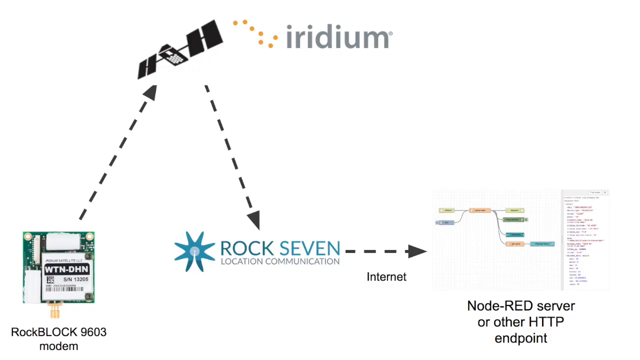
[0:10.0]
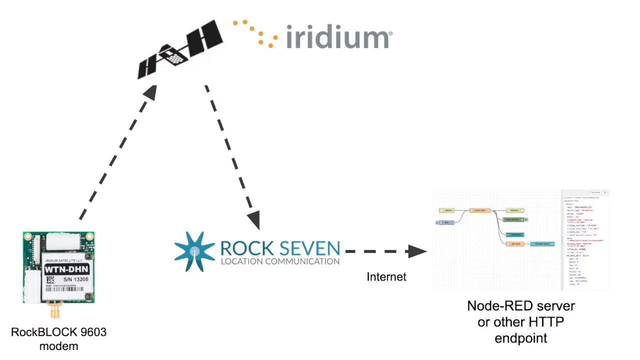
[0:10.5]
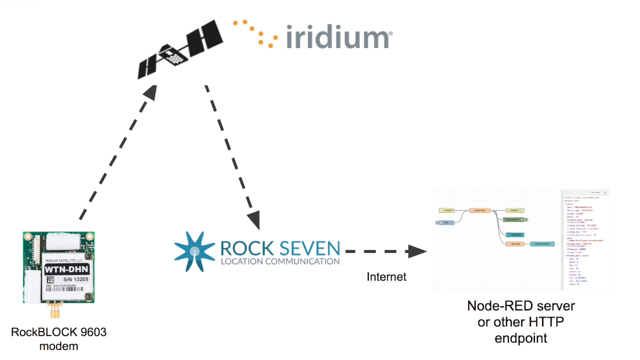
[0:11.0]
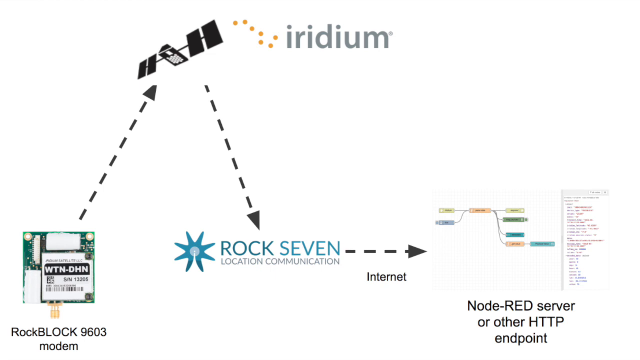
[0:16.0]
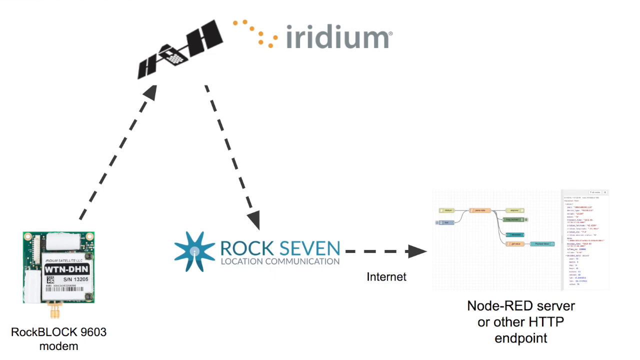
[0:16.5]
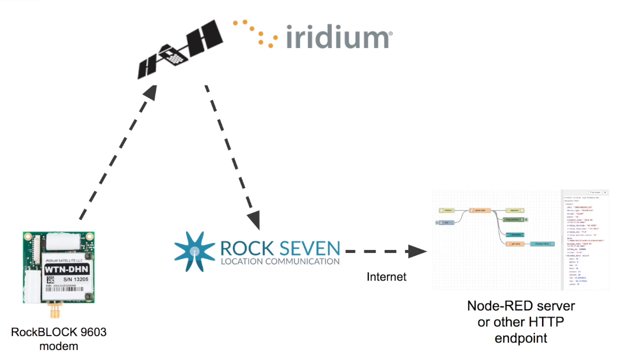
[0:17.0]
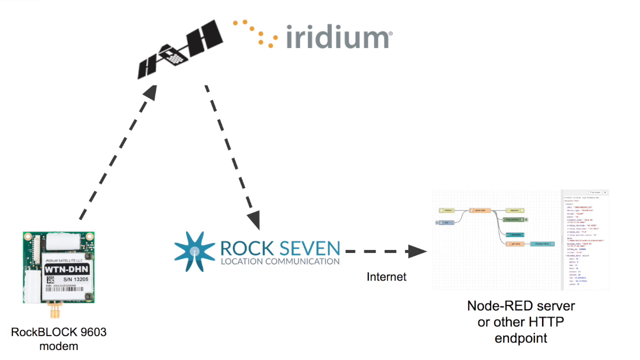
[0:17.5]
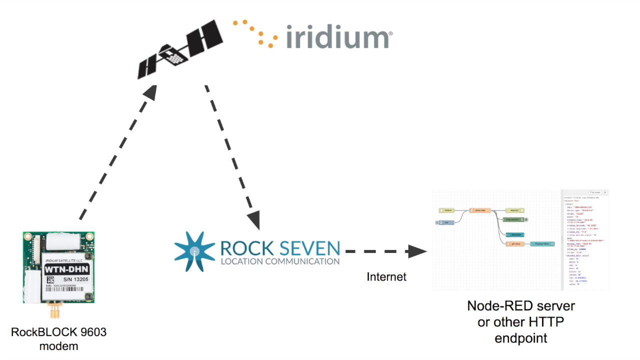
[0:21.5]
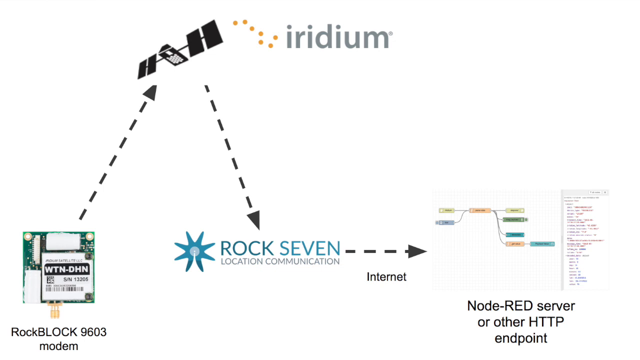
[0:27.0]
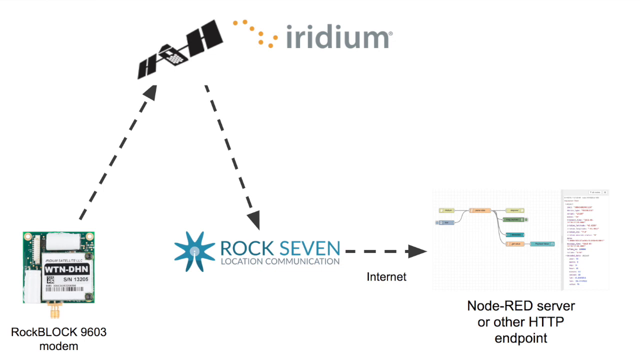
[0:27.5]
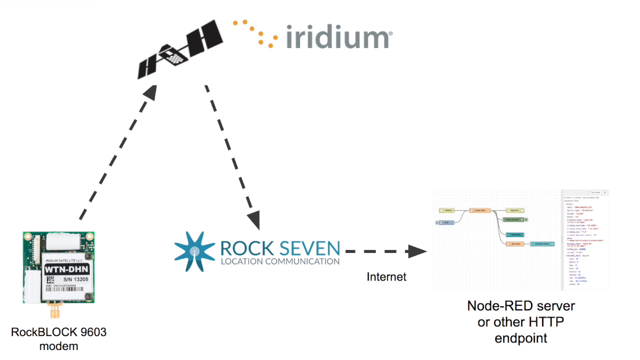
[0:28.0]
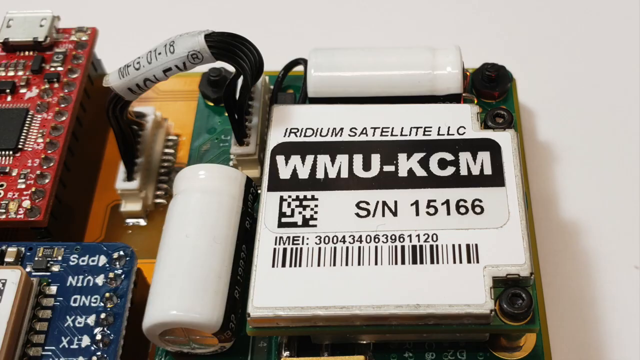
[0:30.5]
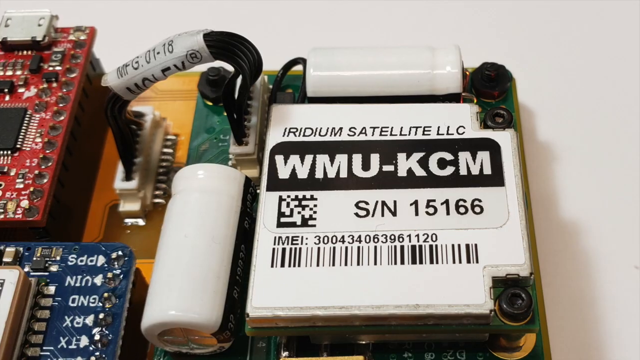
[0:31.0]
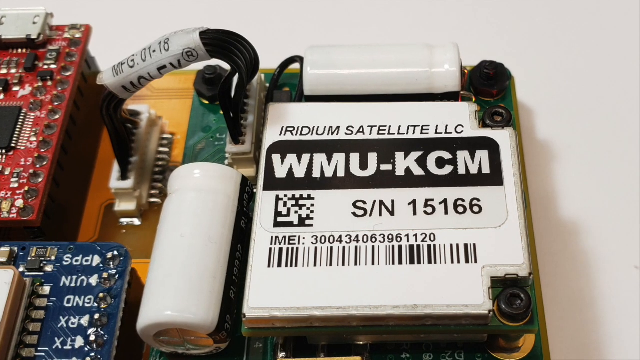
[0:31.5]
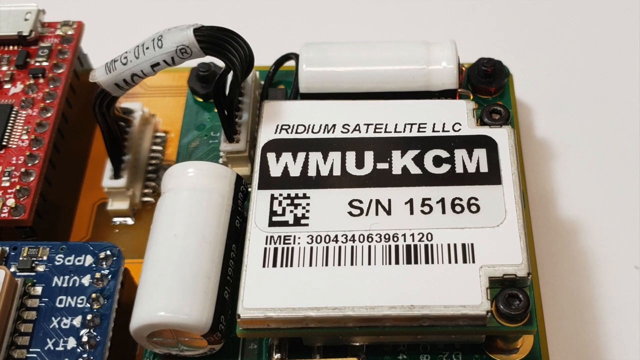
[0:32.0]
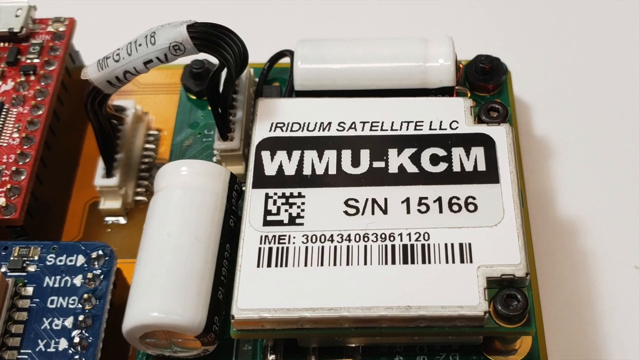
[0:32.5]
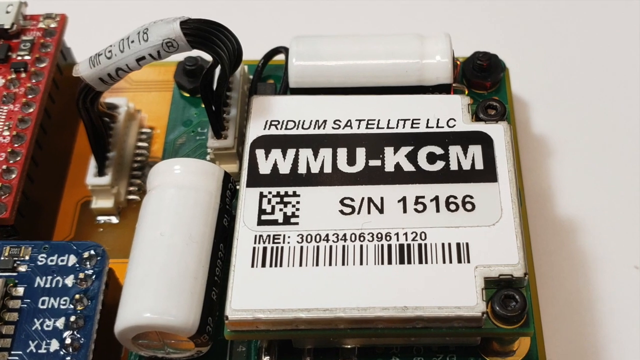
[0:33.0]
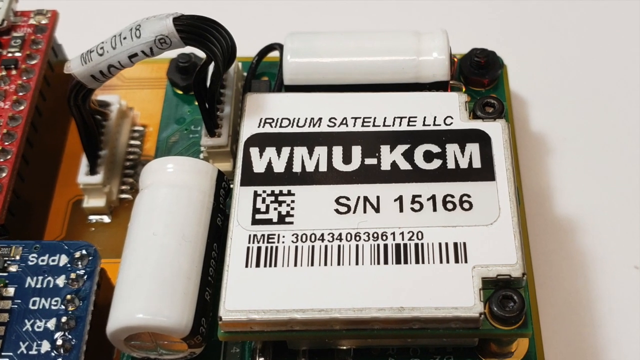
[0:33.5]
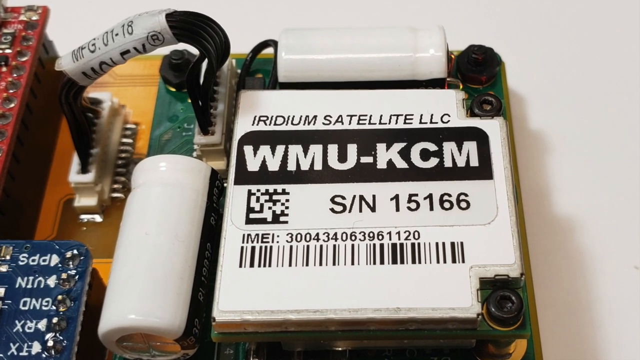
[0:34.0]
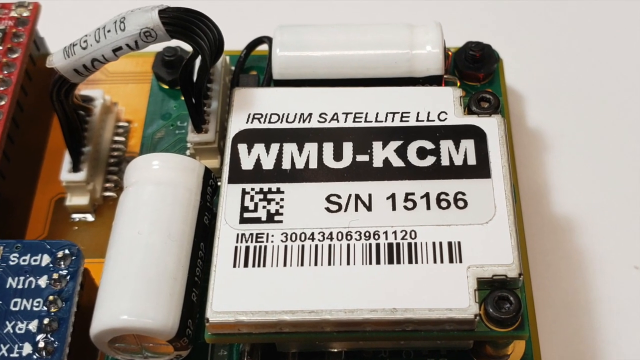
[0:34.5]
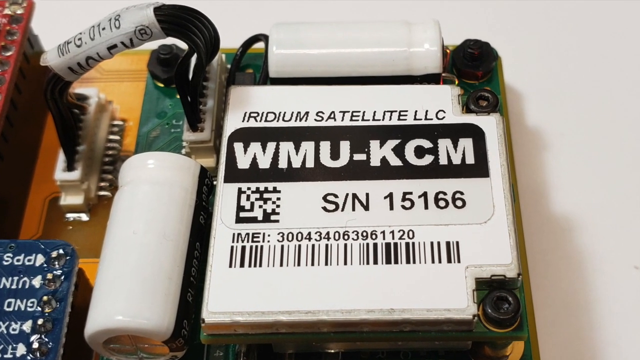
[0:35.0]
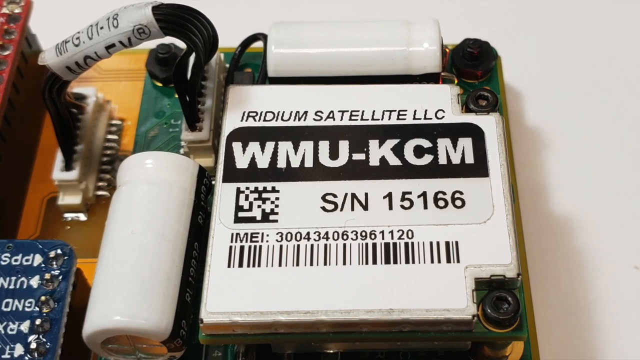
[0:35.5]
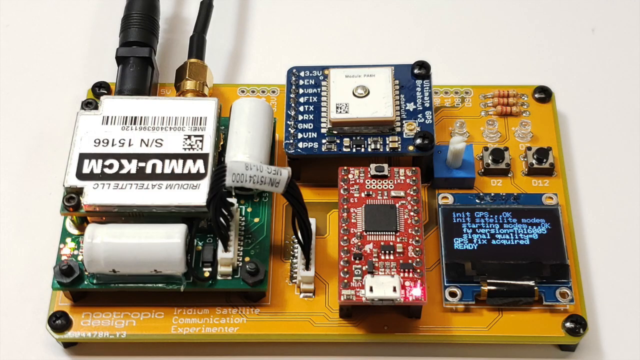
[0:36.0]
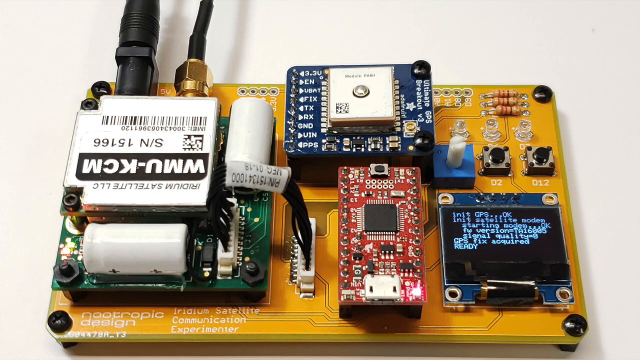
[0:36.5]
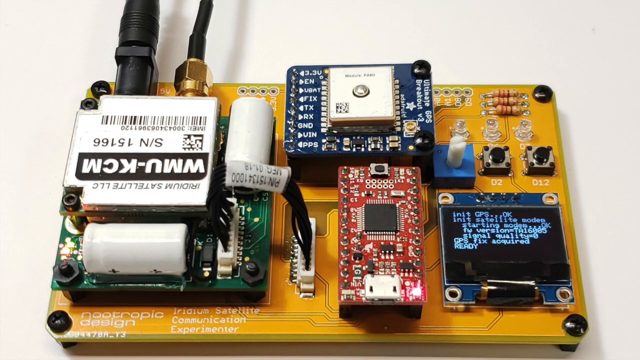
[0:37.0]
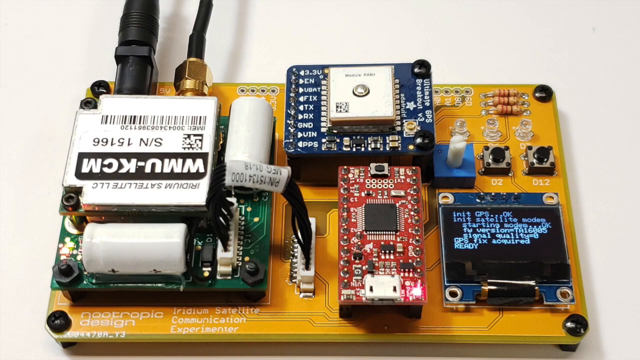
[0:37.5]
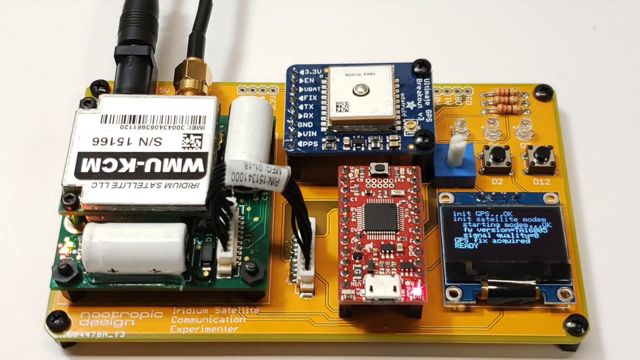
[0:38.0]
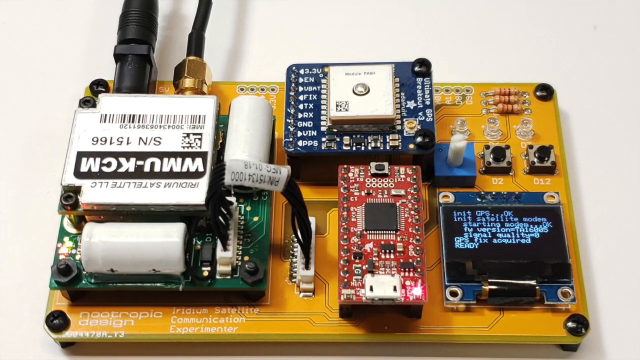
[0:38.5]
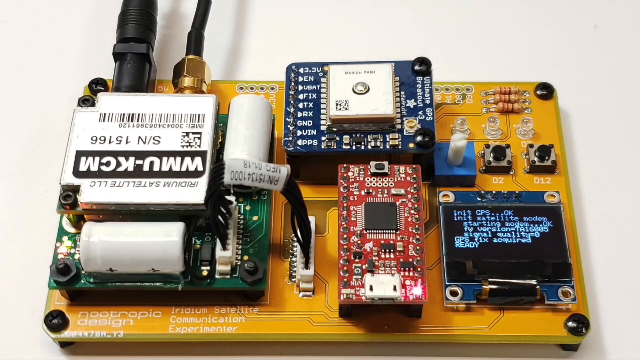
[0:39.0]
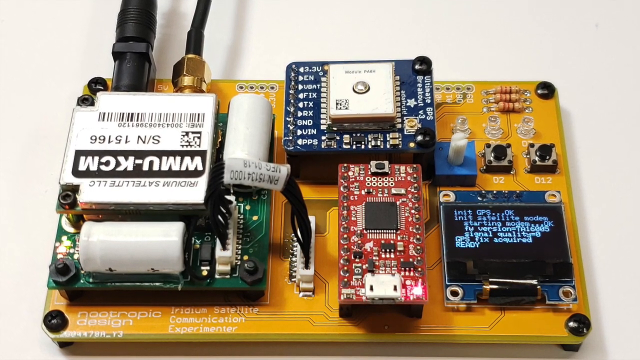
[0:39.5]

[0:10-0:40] The white background with dotted arrows pointing to different things remains. Above, in the right corner, is a small diagram in really small print: two items go up into one, that one goes to four, which go to one at the bottom. Next is a small rectangle containing code. The view then moves inside an electrical component. A red box is in the top left, and a blue one below it, of which only the upper corner is visible. In the center is a big white component that says "Iridium Satellite LLC" in black. Below that is a black border with "WMU-KCM" in white, and below that a QR code. To the right of the QR code is the SN number 15166, and below that the IMEI number with a barcode beneath it. To the left of it and at the top is a kind of almost battery shape; both are white. Black plugs come out of it in the top left corner and go over to the component next to the red box on the left side, as the camera slowly zooms in toward the white box. It then cuts to a different shot in which the white box is upside down on the left side, with two black plugs coming off its top. The red one is down to the right of it, the blue one up at the top, and there are more electrical components and a small disc in the bottom right as the camera slowly zooms in.